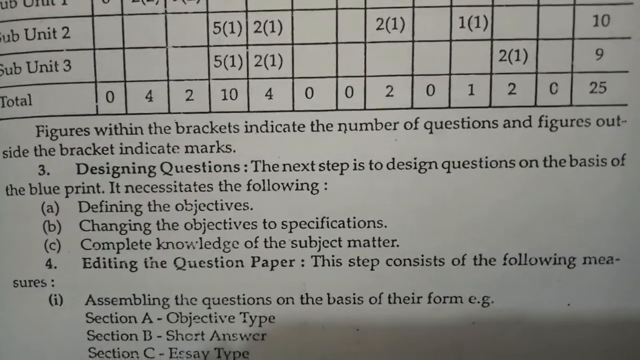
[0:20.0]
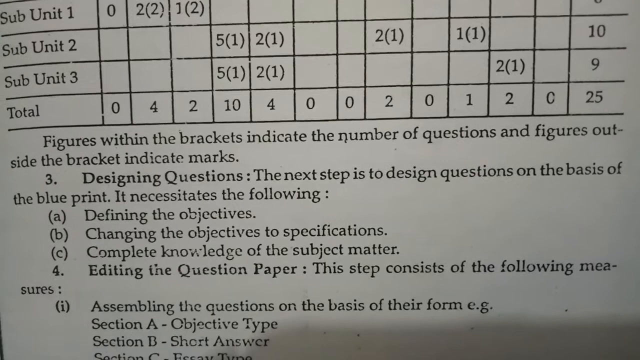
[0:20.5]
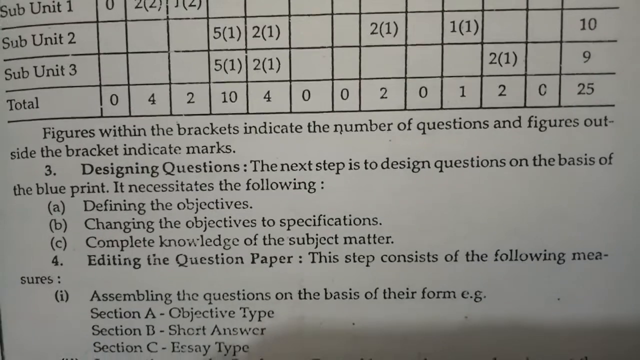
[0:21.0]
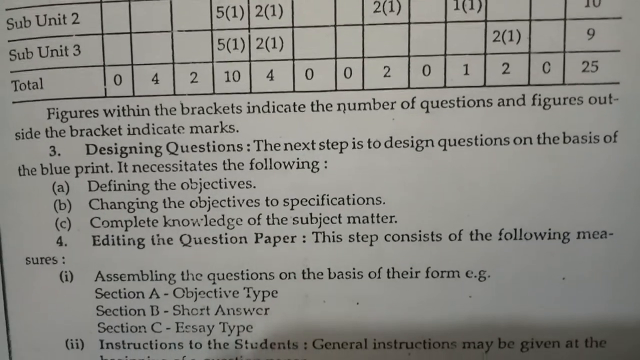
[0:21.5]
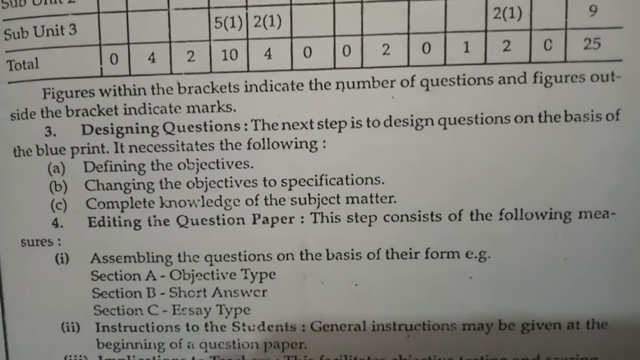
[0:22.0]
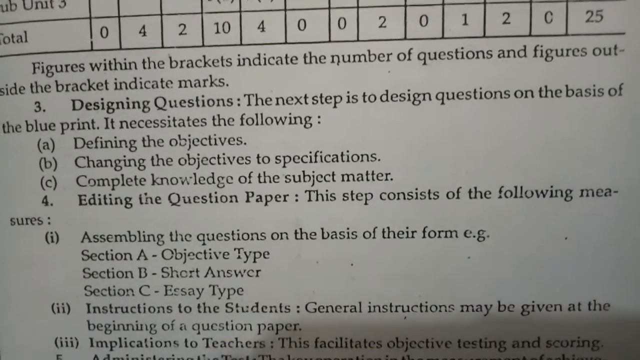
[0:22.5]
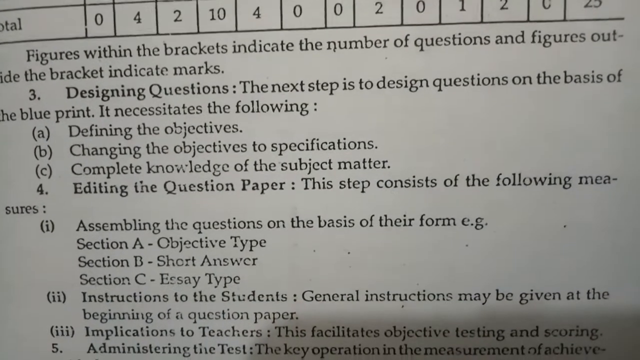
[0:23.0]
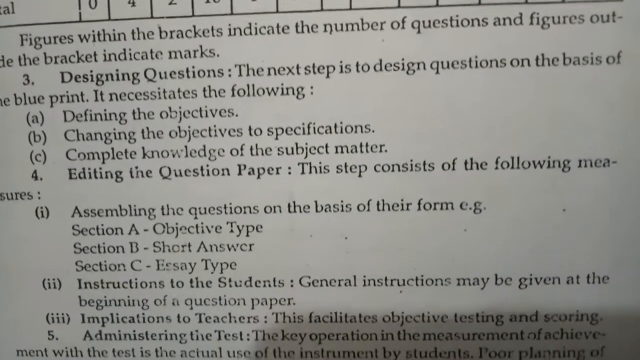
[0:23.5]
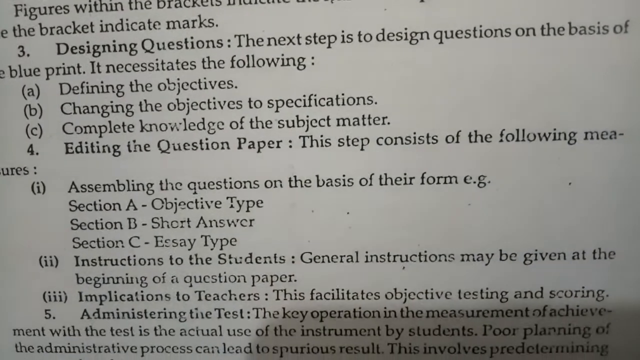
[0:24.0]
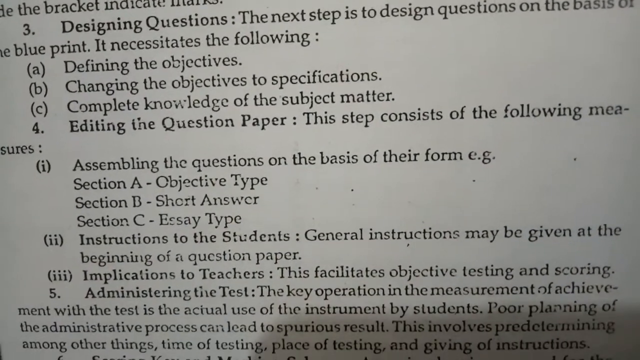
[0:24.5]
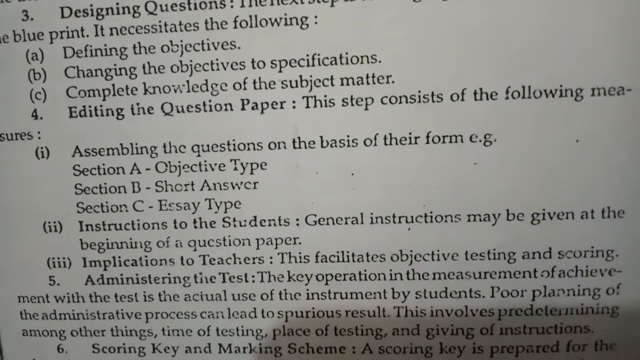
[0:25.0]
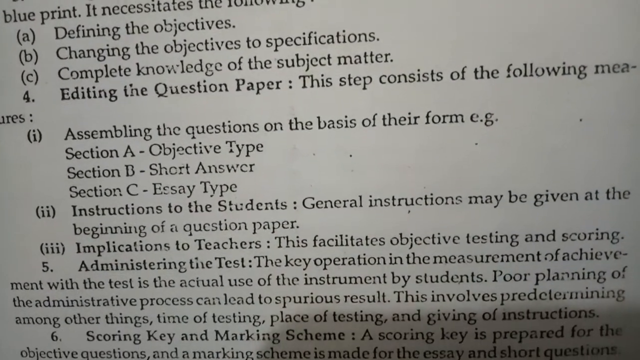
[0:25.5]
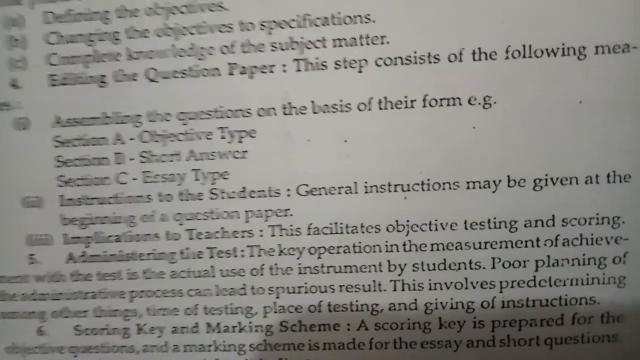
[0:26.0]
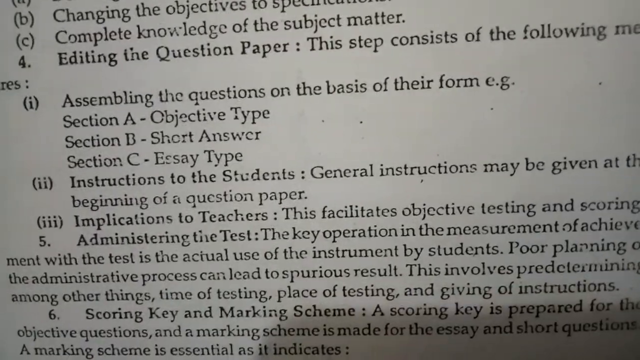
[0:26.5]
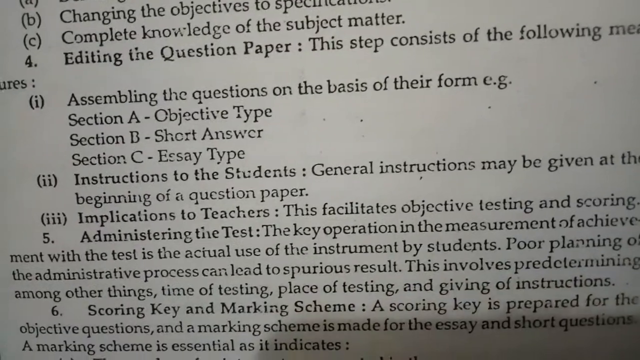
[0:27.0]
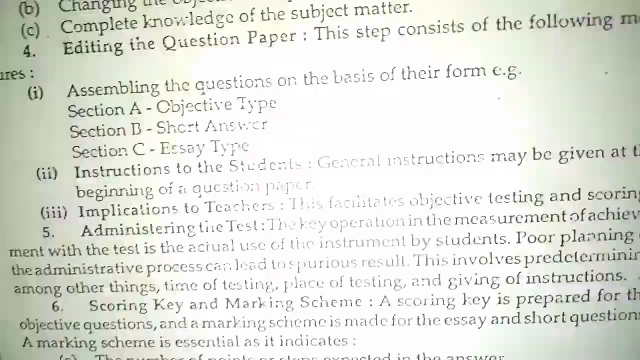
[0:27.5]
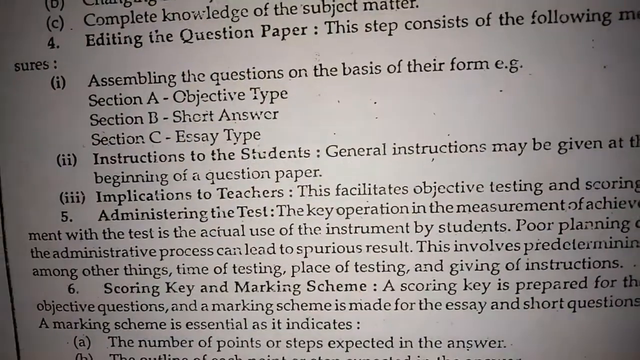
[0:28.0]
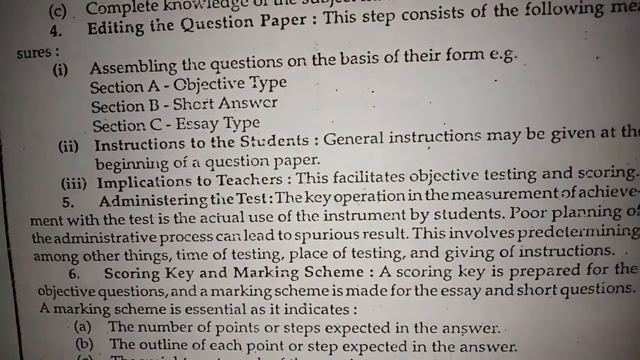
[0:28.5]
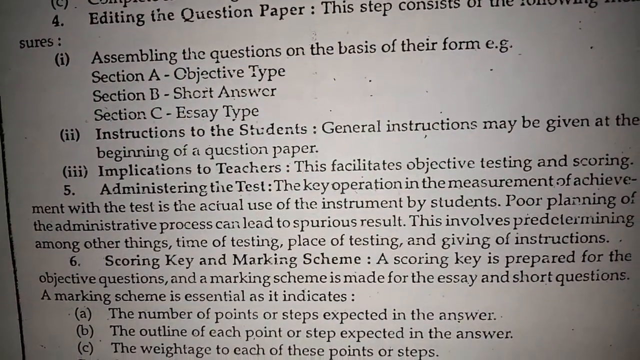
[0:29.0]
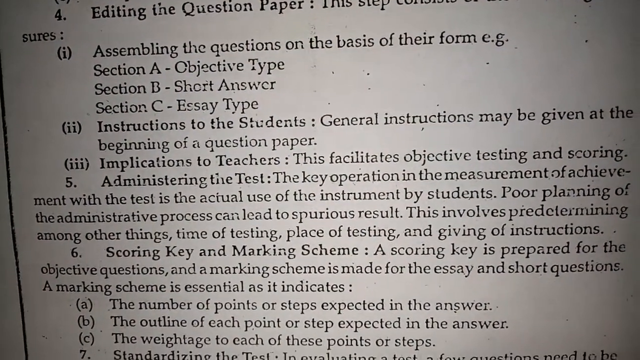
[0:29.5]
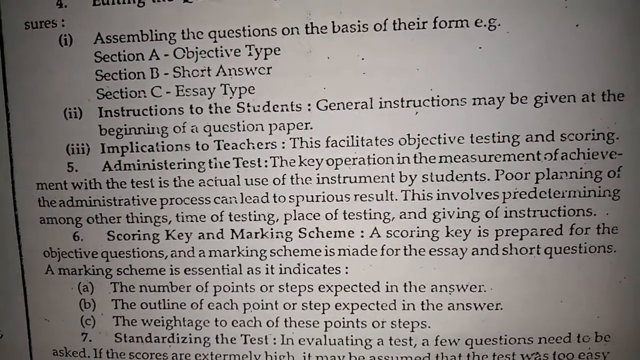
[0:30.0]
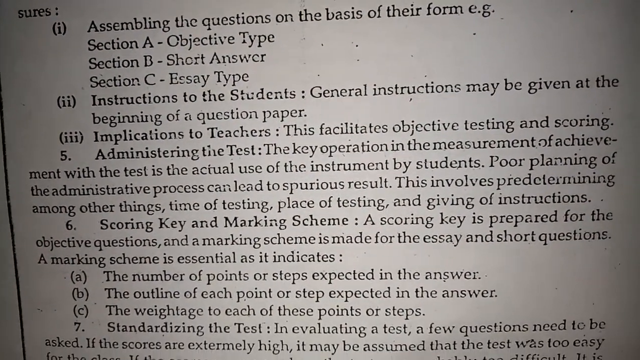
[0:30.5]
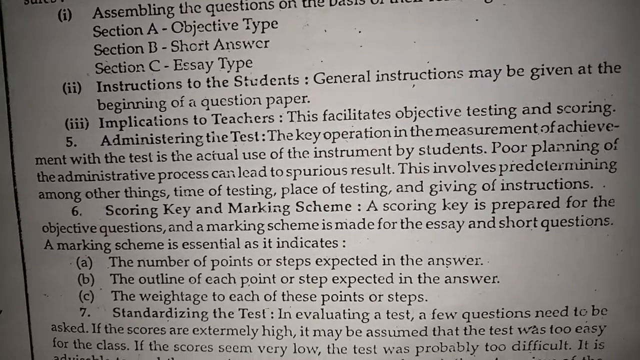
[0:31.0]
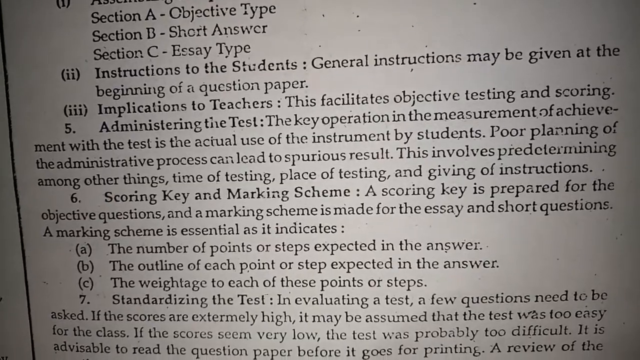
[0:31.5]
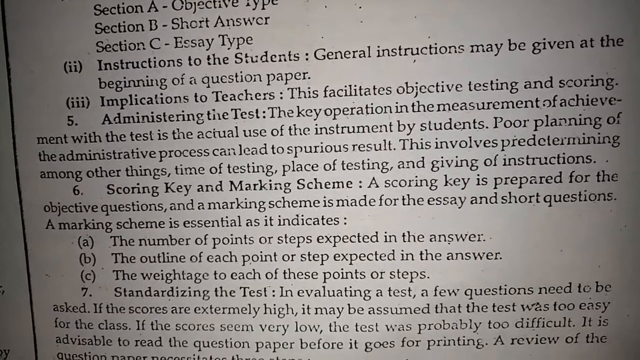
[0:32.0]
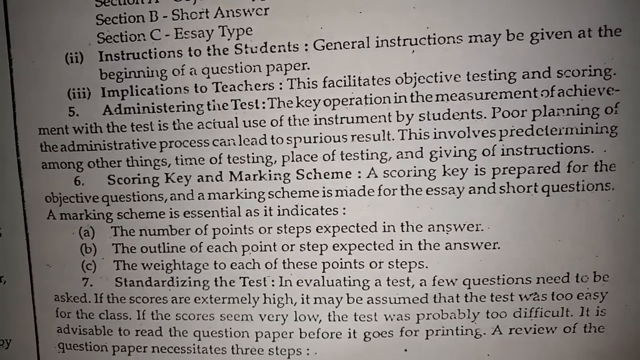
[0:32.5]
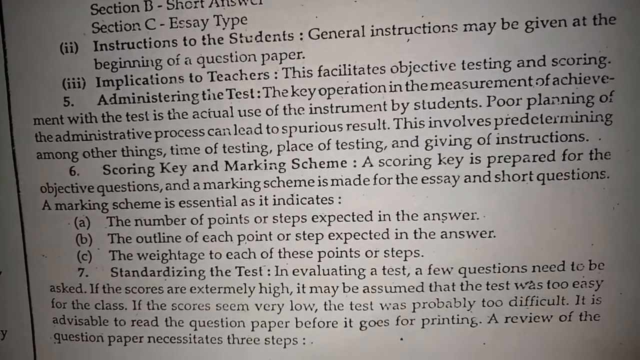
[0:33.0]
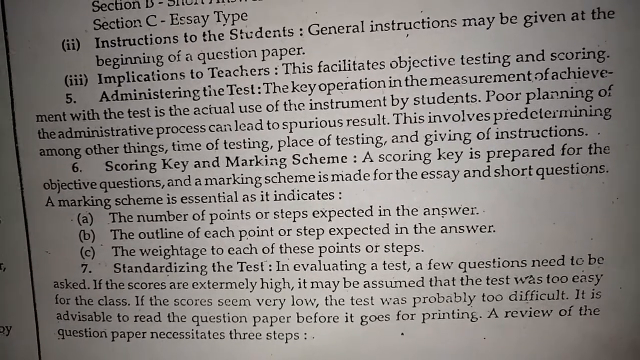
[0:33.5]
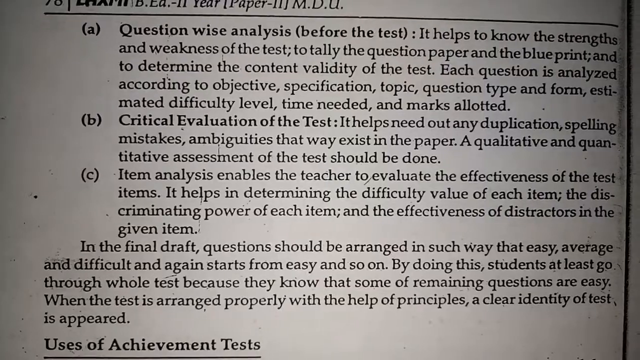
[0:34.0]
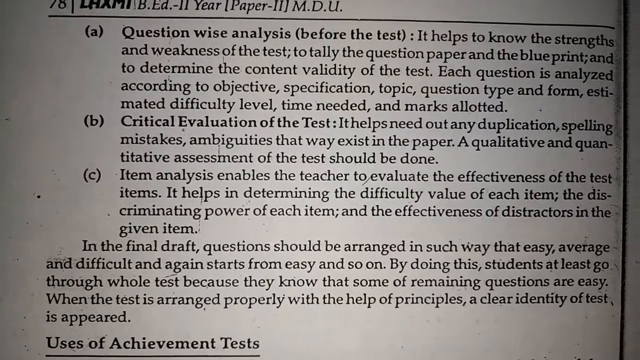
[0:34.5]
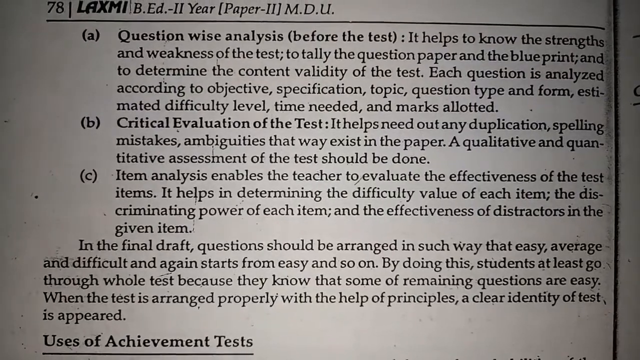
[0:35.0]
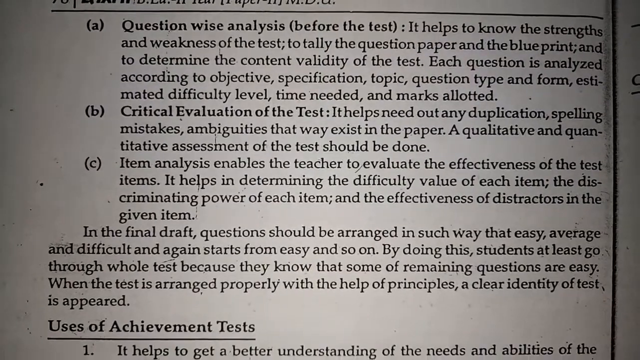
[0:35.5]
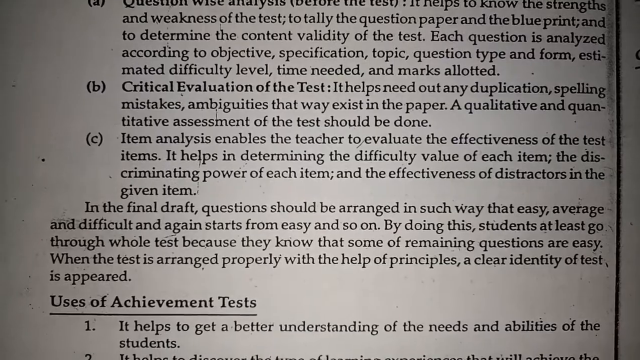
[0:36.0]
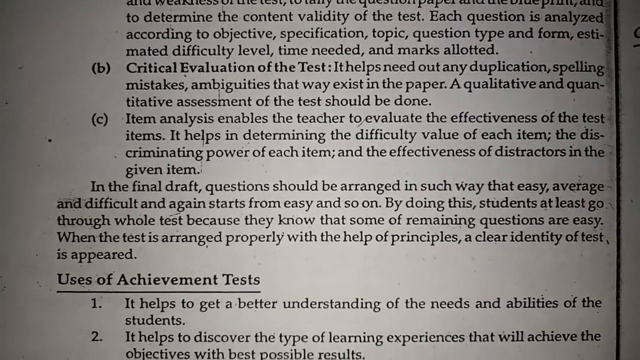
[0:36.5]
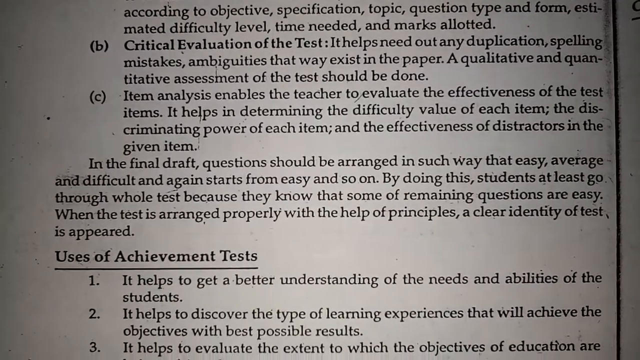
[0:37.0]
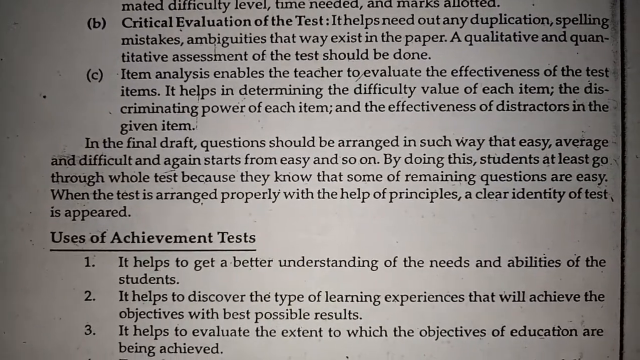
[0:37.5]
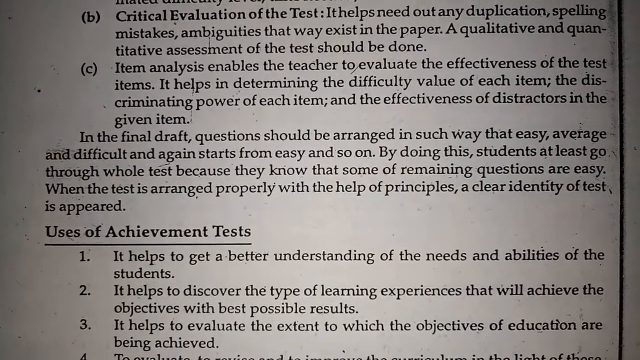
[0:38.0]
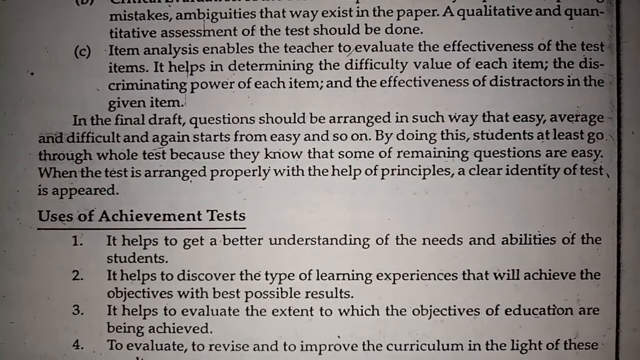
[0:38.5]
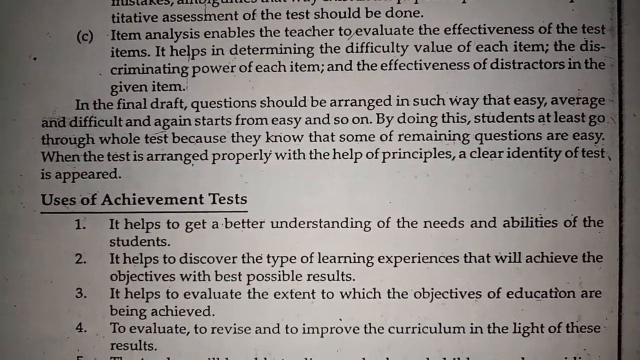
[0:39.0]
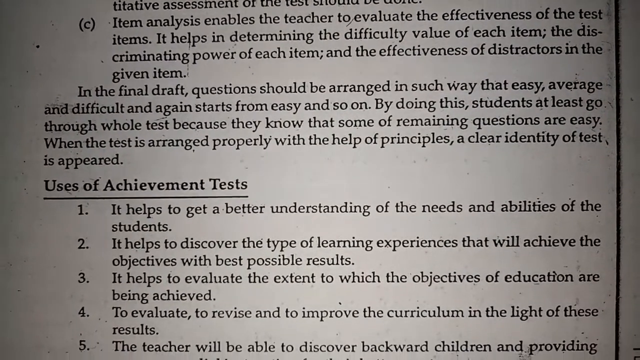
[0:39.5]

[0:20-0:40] The video continues panning down, revealing other steps in the text that give teachers directions for constructing a test, including administering the test and the scoring key and marking scheme. A new list appears at the top. Its first point is a question-wise analysis before the test, which "helps to know the strengths and weaknesses of the test," to tally the question paper and the blueprint, and to determine the content validity of the test. Point B, "critical evaluation of the test," concerns duplication, spelling mistakes and ambiguities in the paper. Point C reads "item analysis enables the teacher to evaluate the effectiveness of the test items." Farther down, the paper lists the uses of achievement tests, with several reasons outlined.